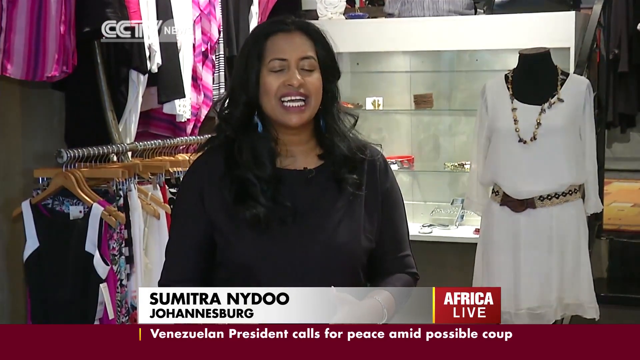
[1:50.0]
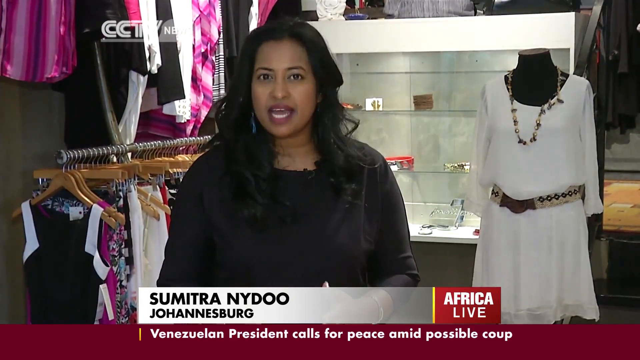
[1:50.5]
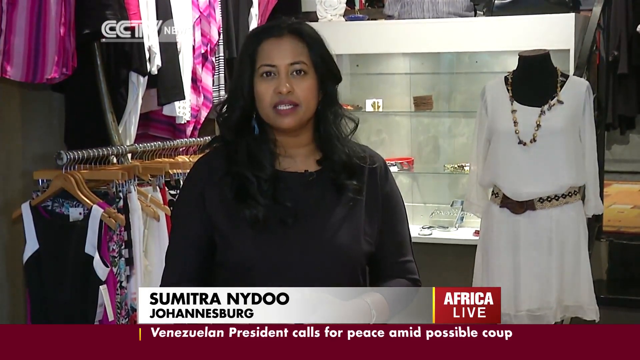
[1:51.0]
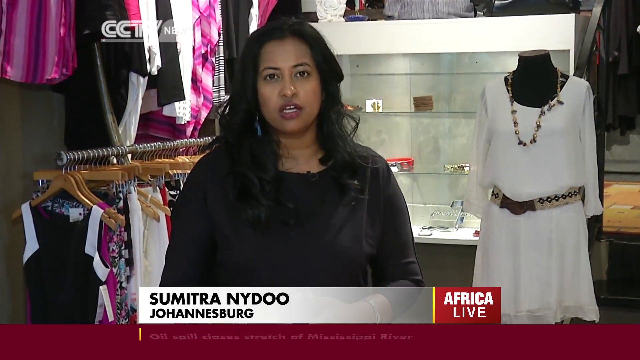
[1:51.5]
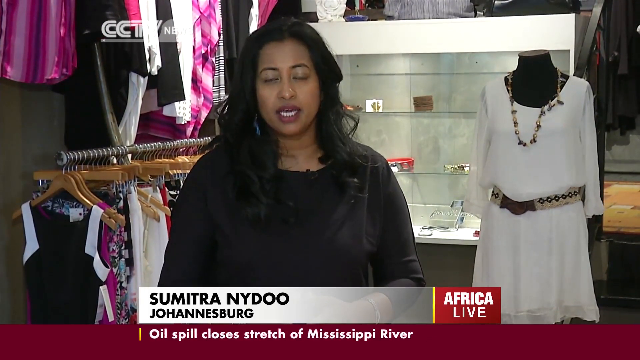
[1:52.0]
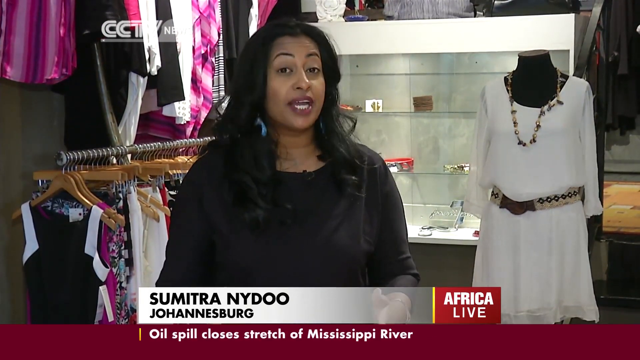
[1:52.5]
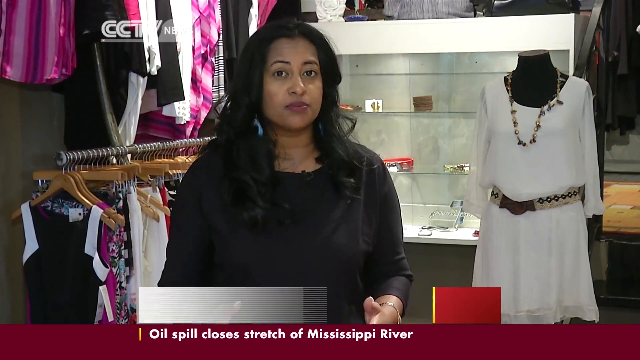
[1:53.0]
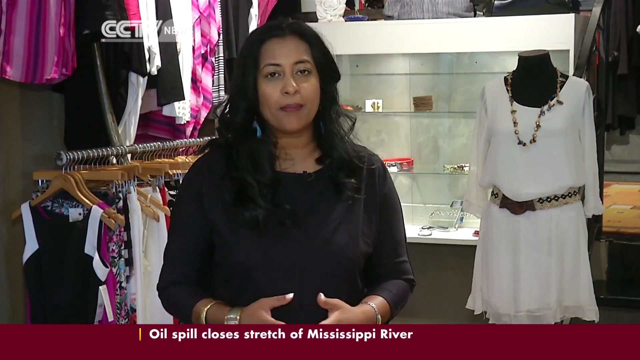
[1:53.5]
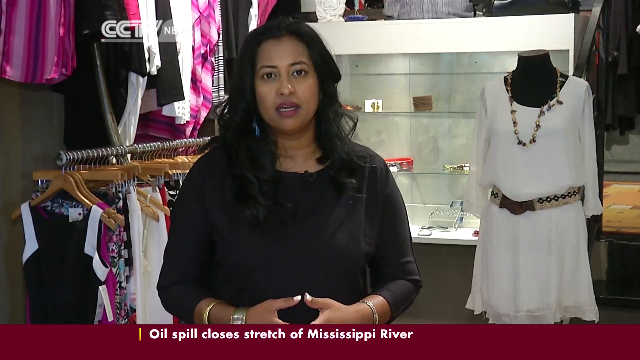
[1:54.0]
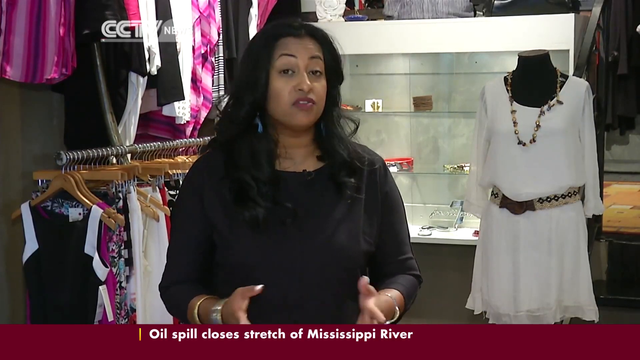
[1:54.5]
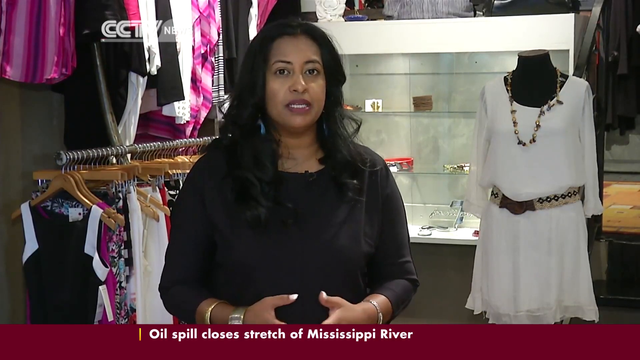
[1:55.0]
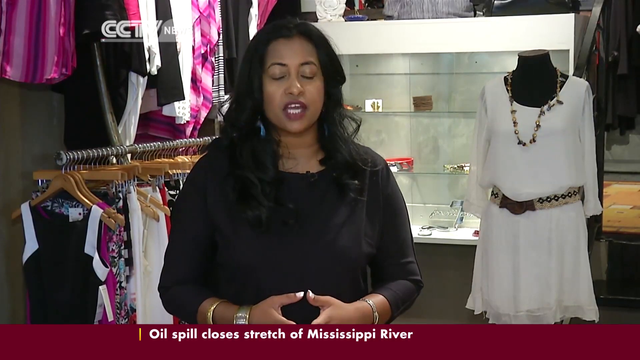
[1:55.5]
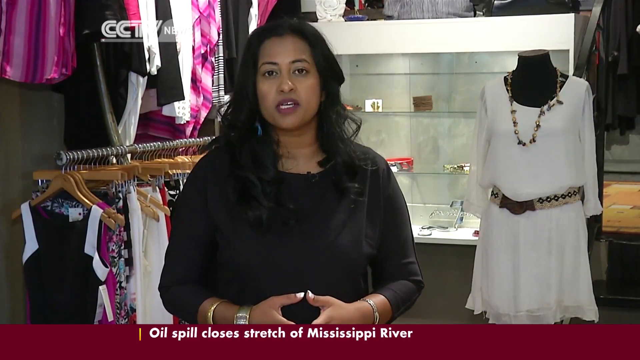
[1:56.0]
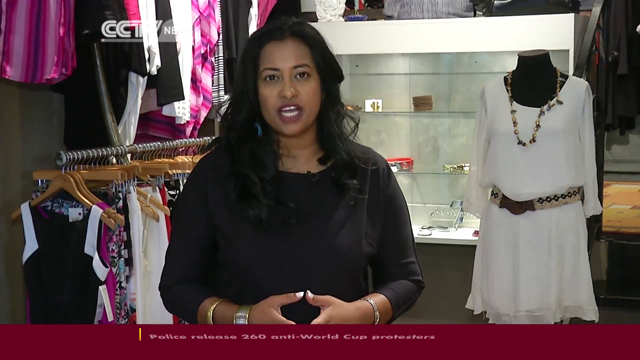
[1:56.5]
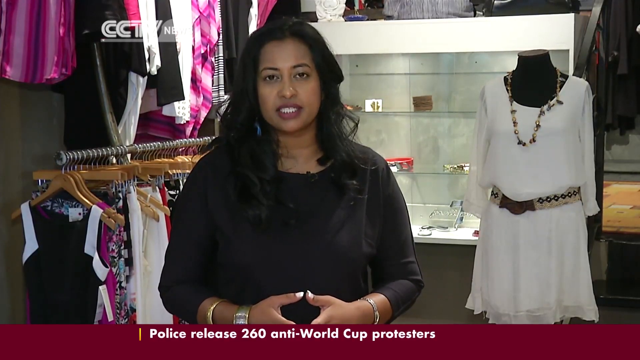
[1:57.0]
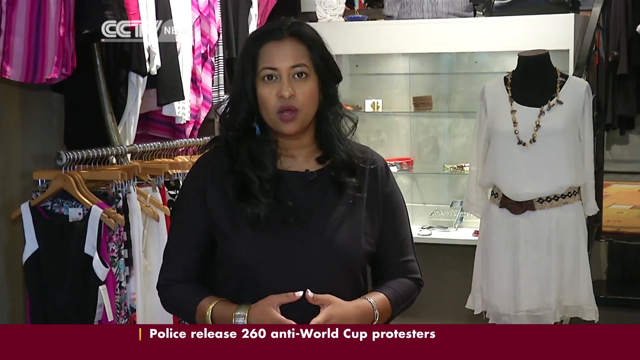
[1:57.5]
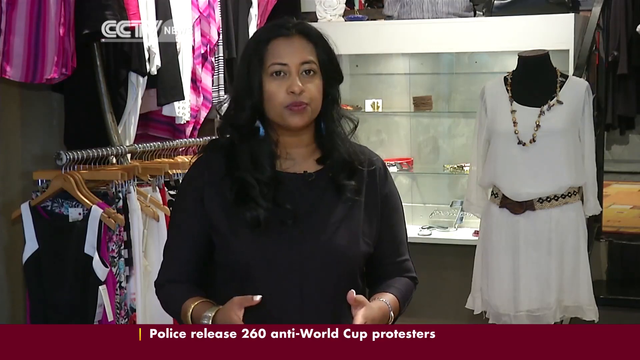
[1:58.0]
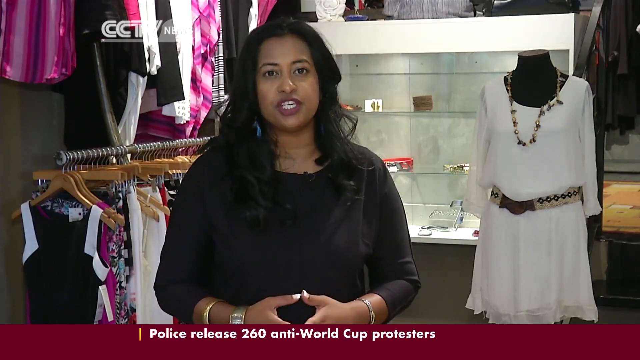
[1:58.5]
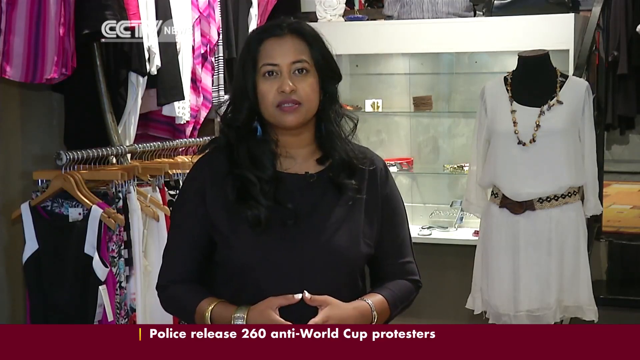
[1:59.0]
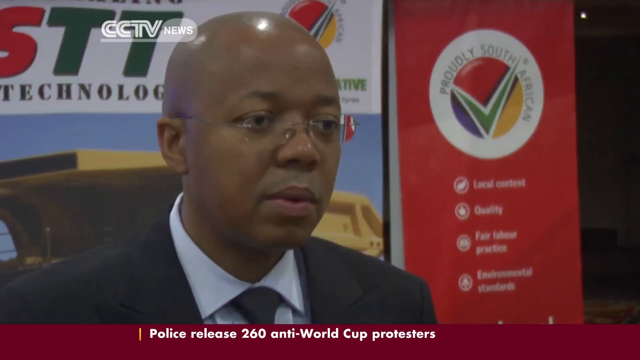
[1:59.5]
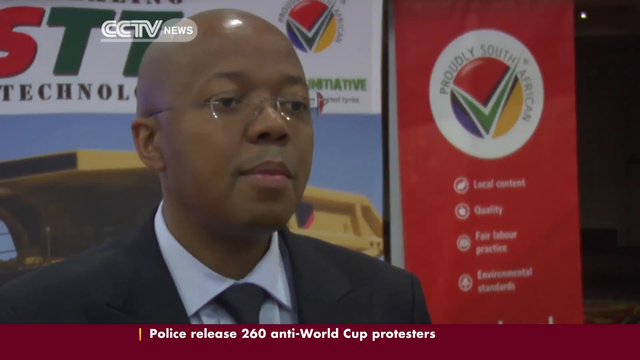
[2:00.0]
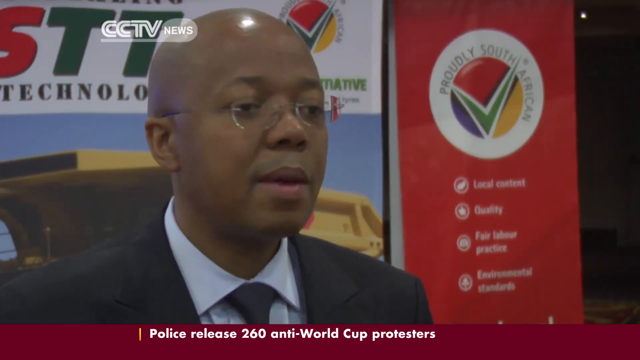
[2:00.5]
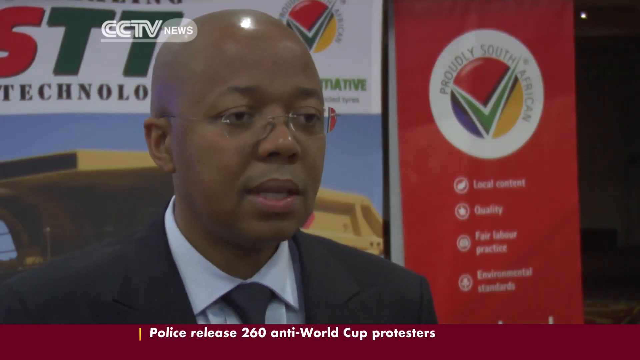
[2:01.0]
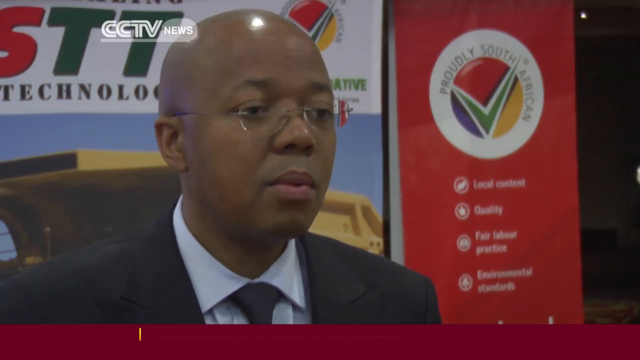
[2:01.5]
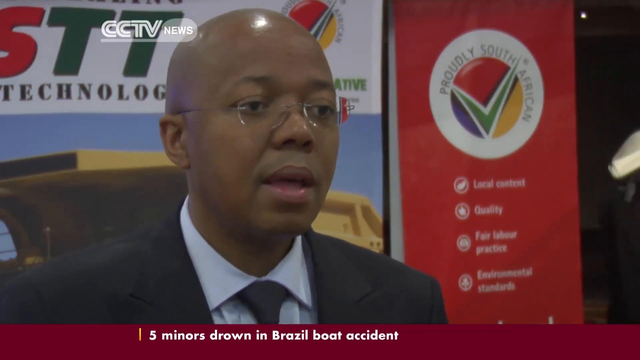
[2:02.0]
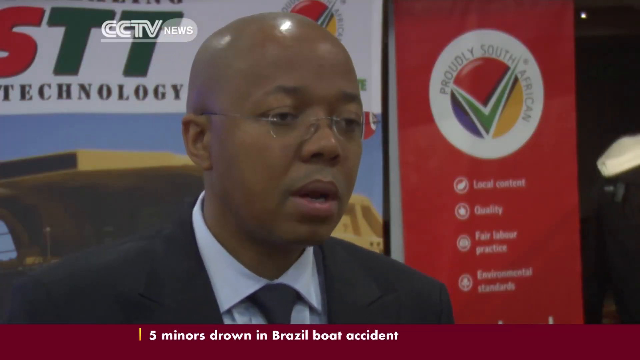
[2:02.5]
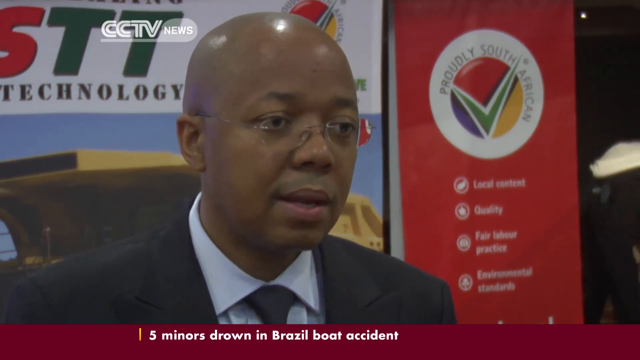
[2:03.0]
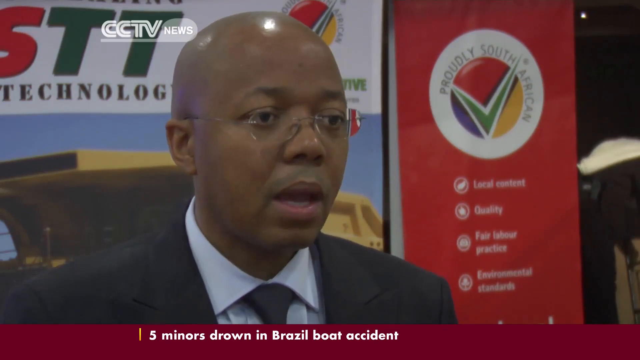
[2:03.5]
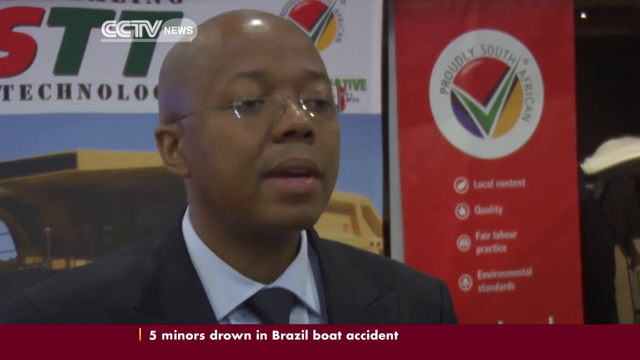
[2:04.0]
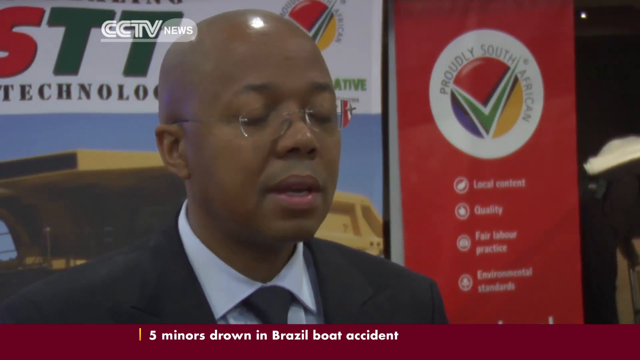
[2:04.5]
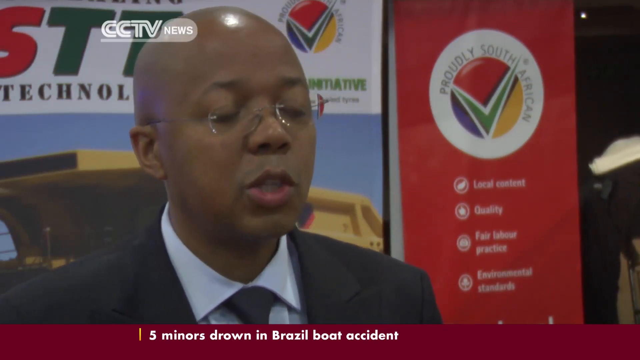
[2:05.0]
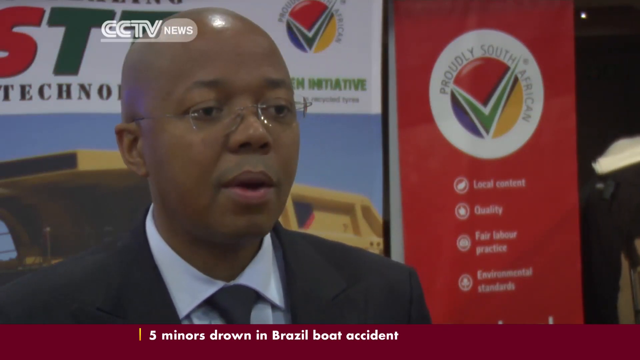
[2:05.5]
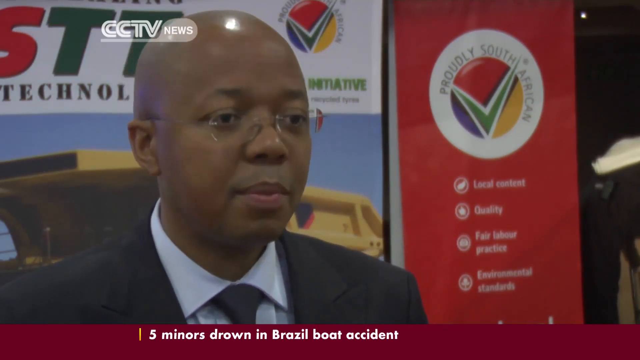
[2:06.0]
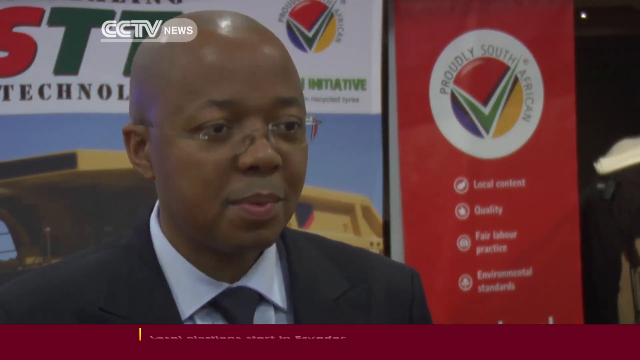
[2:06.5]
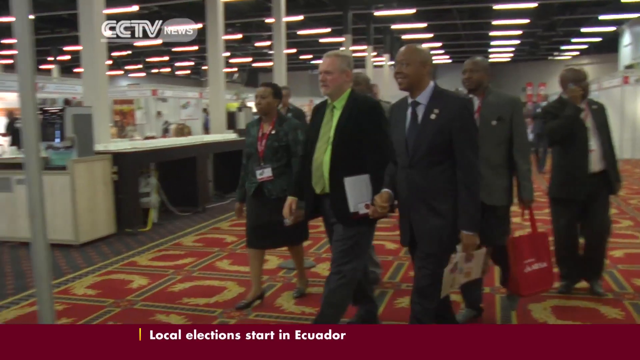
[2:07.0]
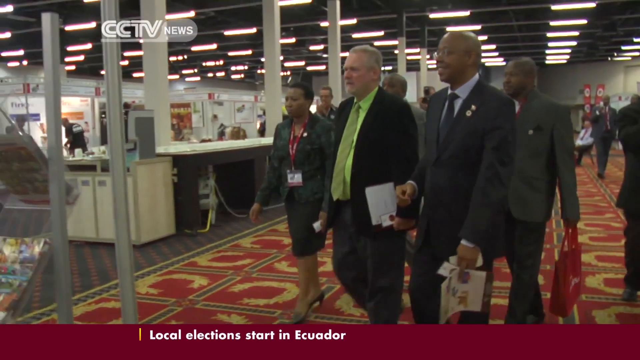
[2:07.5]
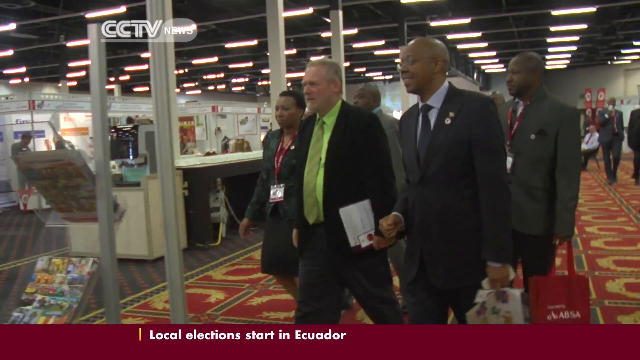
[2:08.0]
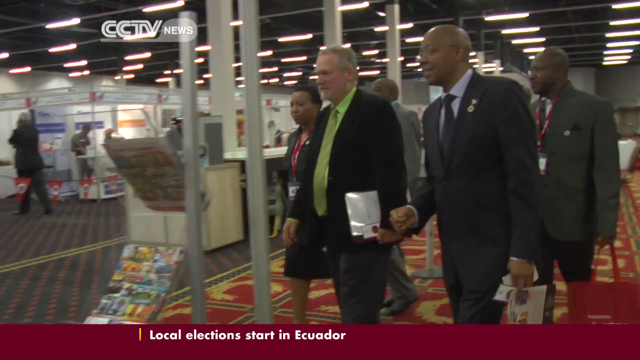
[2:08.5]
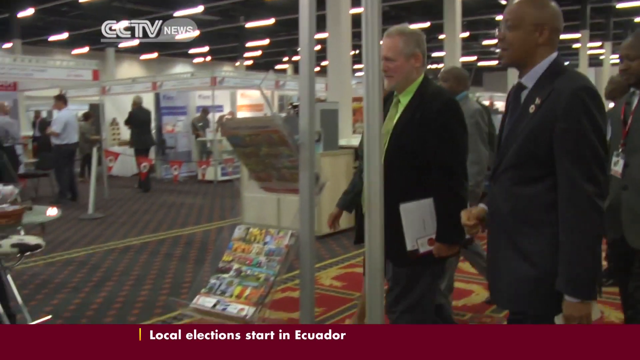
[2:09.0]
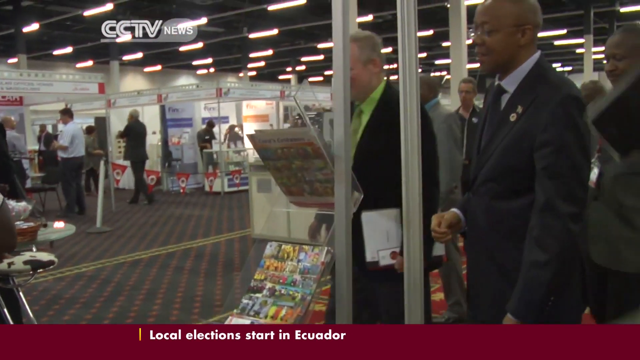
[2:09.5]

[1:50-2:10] The woman talks, with a small microphone on her collar. The women's boutique clothing store holds a lot of women's jewelry and clothes. Her last name is spelled N-Y-D-O-O, and the location is Johannesburg. Text reads "Africa Live," and news runs along the bottom of the screen. She wears wrist jewelry, maybe two bracelets, and apparently a watch. Then an African American man with glasses and very small ears speaks, wearing a black suit. He and a group of other women are seen walking across the convention, possibly as the top leaders or organizers of the event.